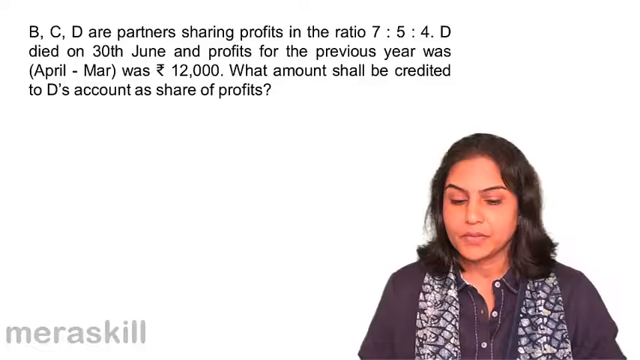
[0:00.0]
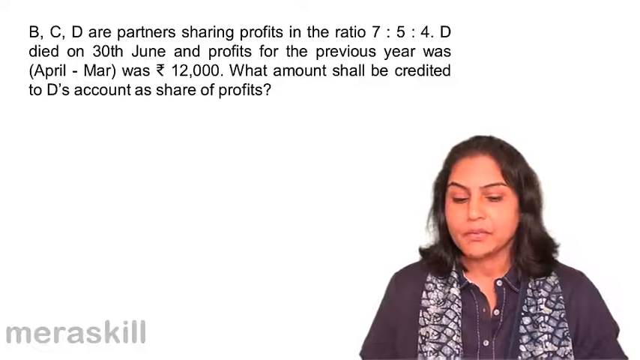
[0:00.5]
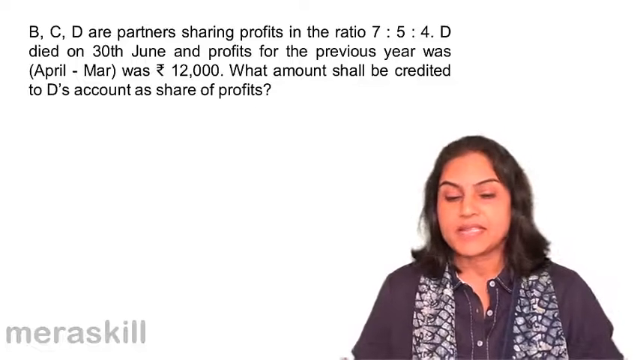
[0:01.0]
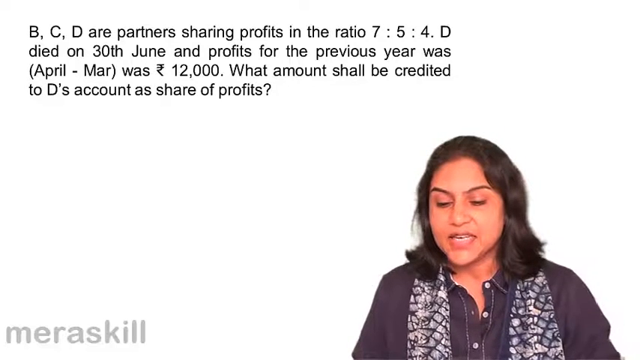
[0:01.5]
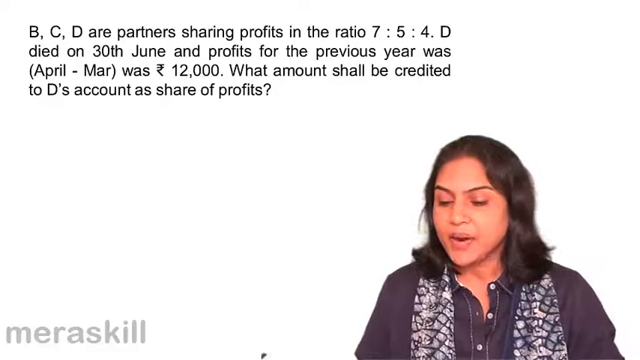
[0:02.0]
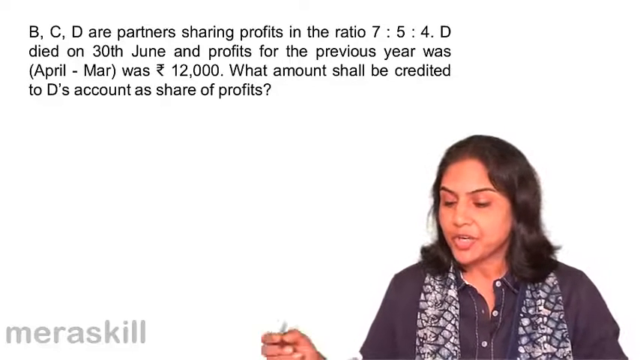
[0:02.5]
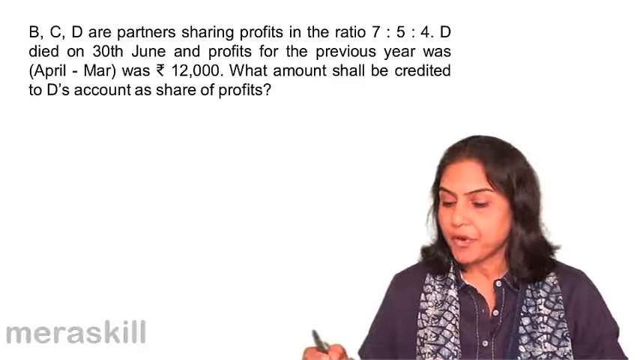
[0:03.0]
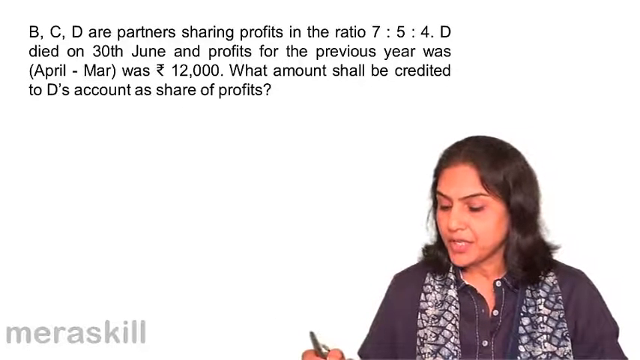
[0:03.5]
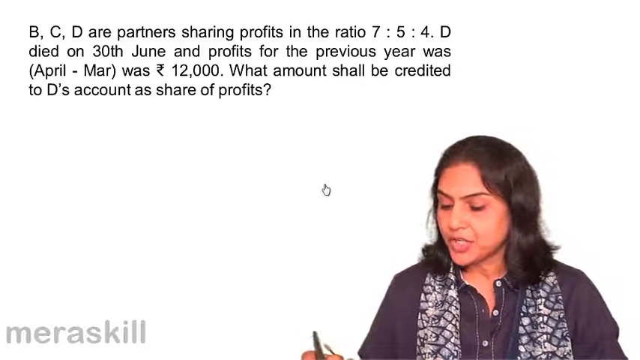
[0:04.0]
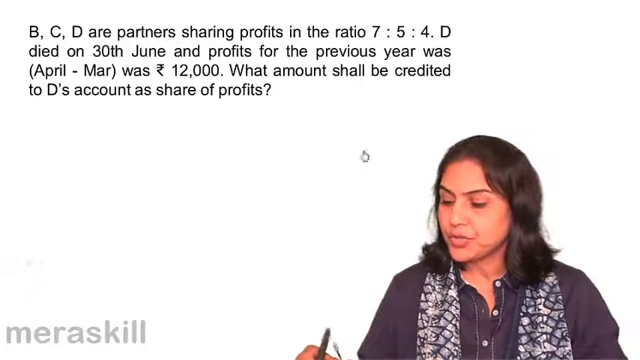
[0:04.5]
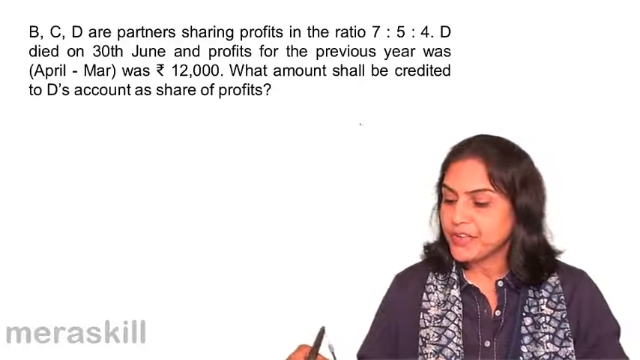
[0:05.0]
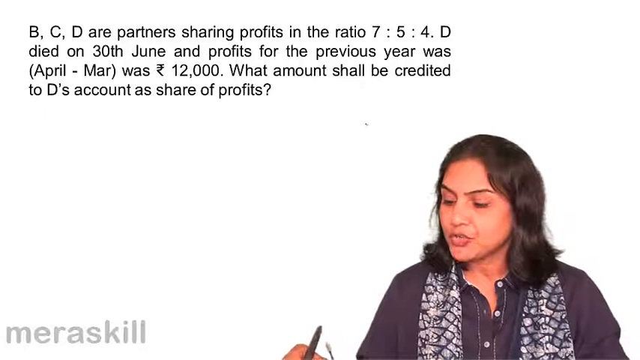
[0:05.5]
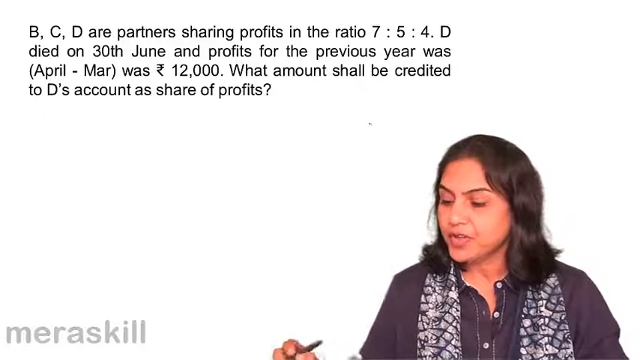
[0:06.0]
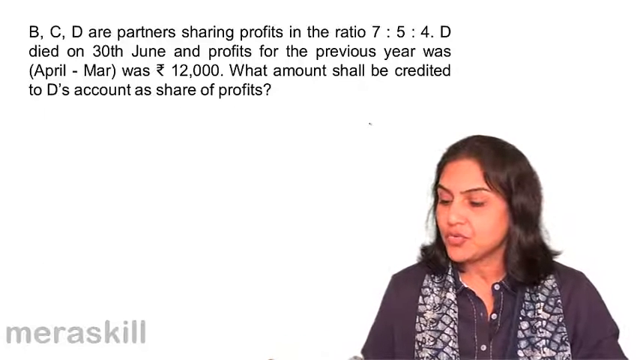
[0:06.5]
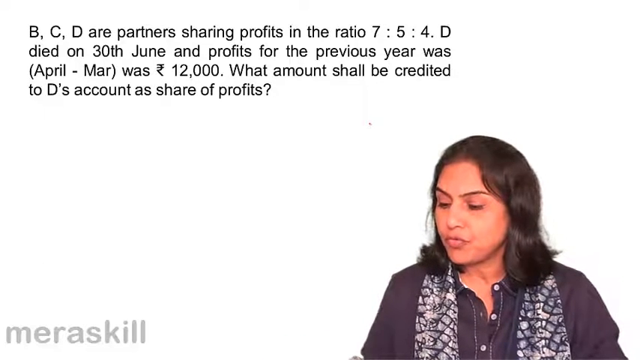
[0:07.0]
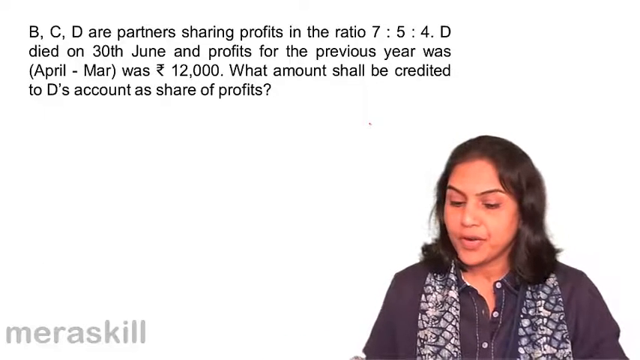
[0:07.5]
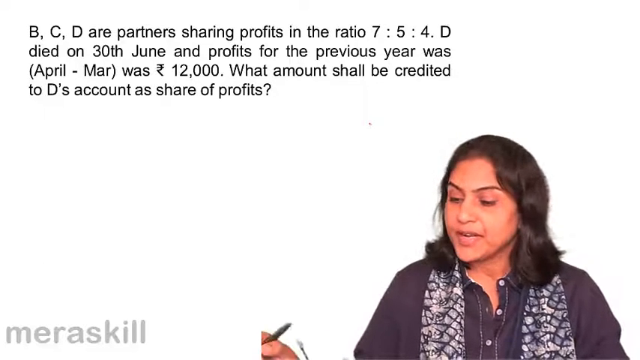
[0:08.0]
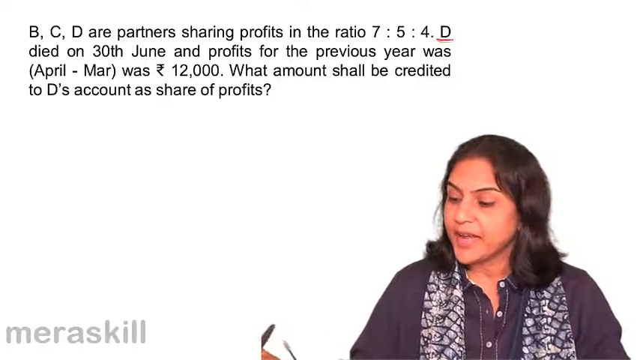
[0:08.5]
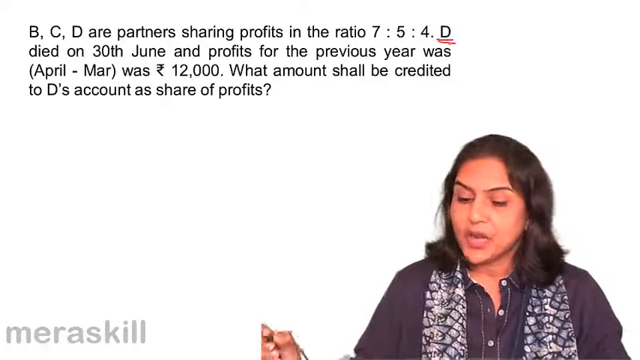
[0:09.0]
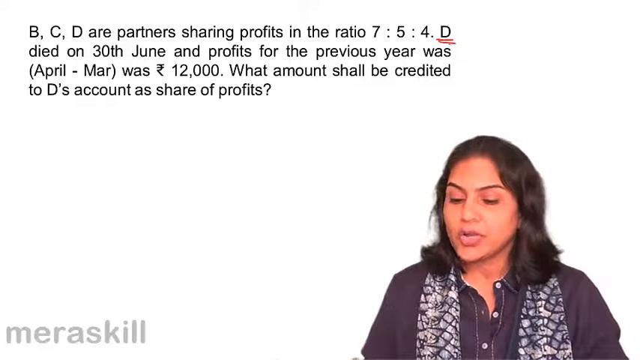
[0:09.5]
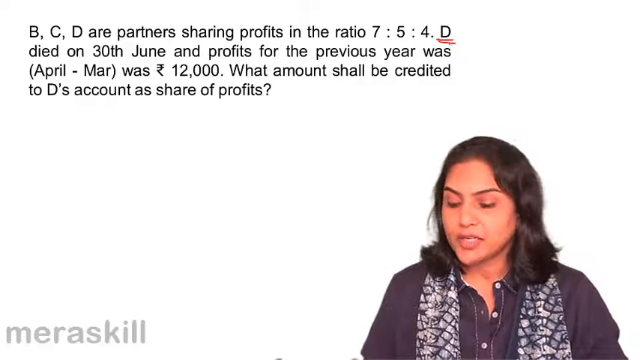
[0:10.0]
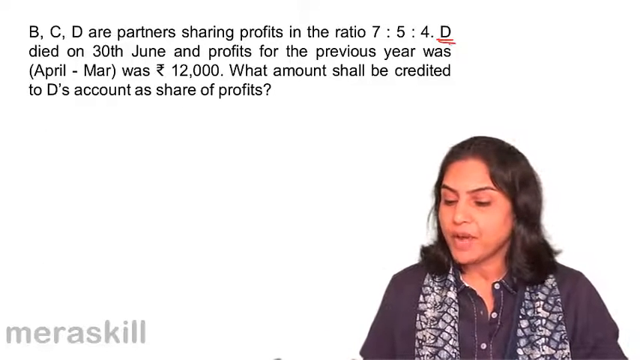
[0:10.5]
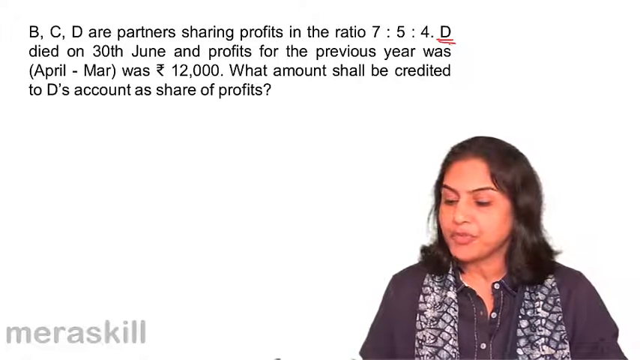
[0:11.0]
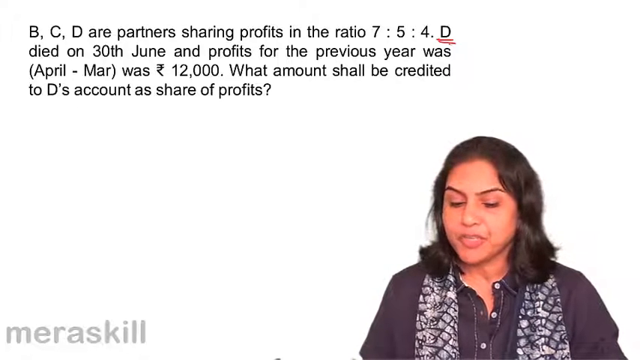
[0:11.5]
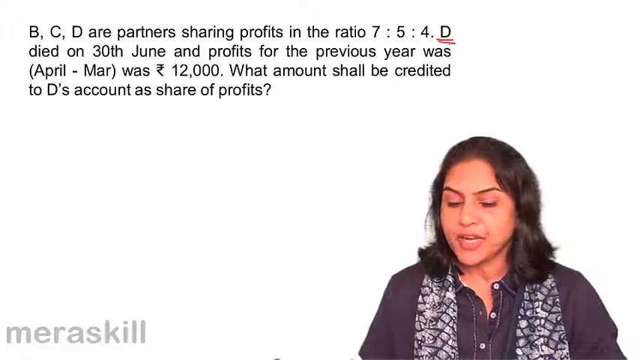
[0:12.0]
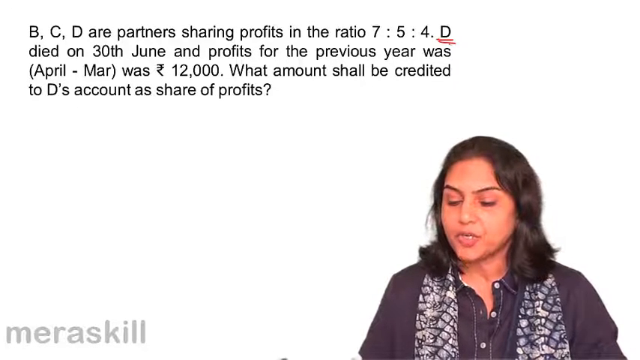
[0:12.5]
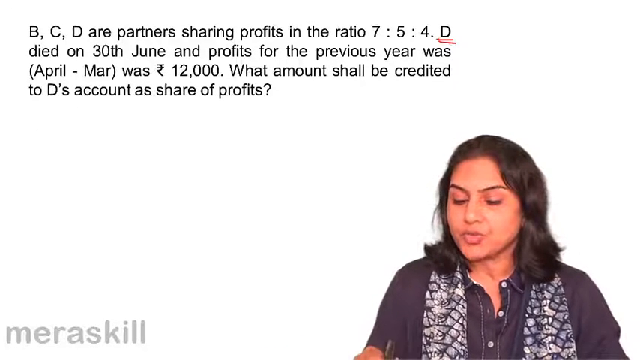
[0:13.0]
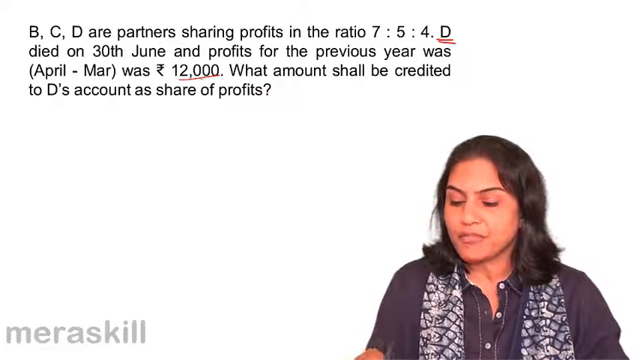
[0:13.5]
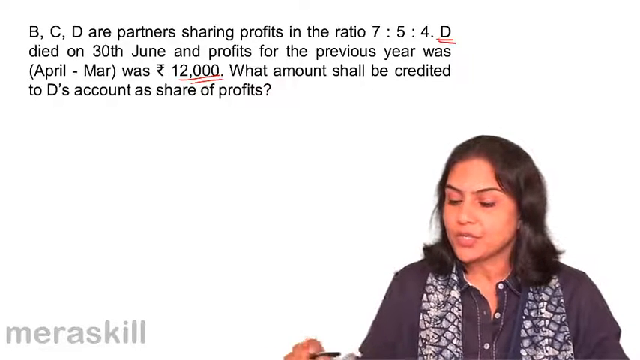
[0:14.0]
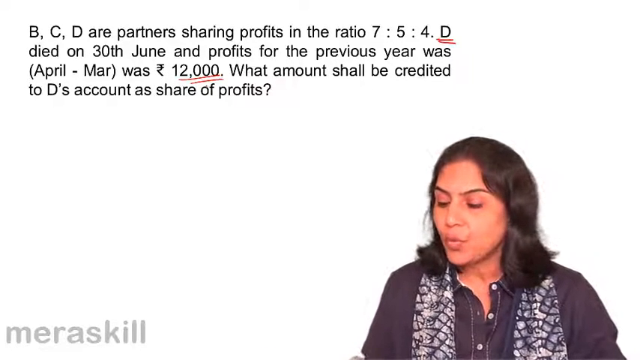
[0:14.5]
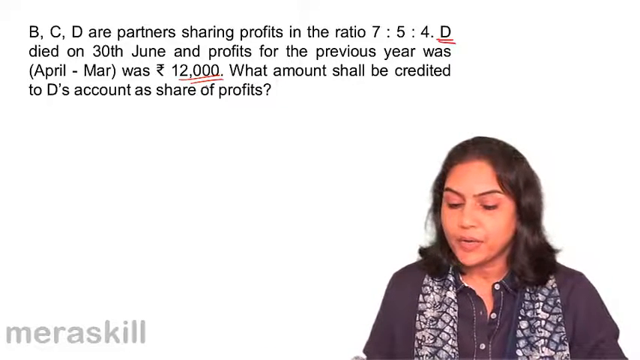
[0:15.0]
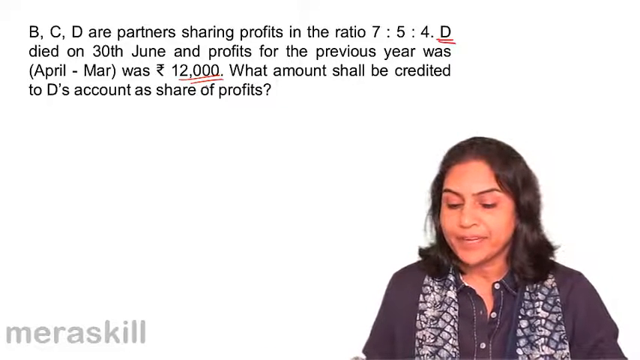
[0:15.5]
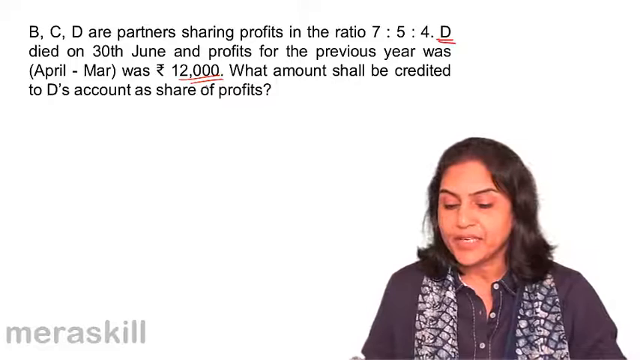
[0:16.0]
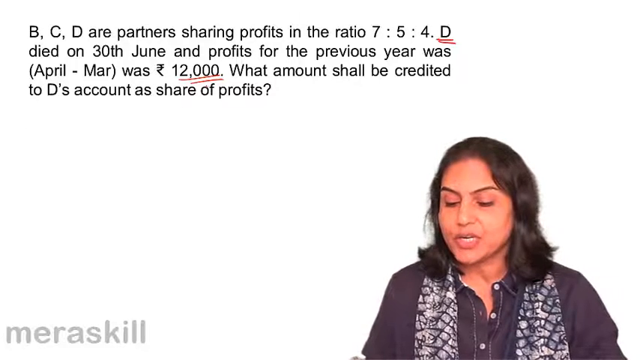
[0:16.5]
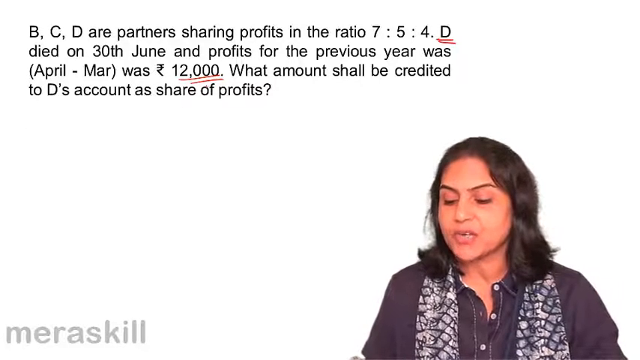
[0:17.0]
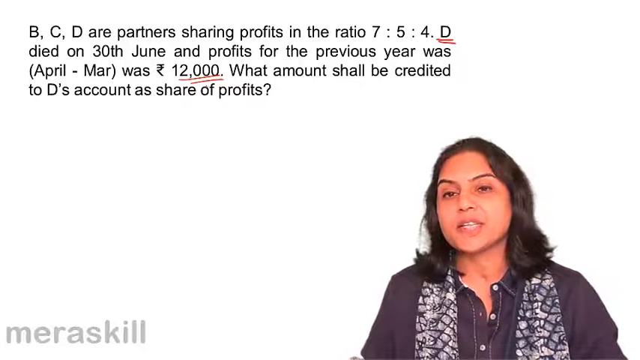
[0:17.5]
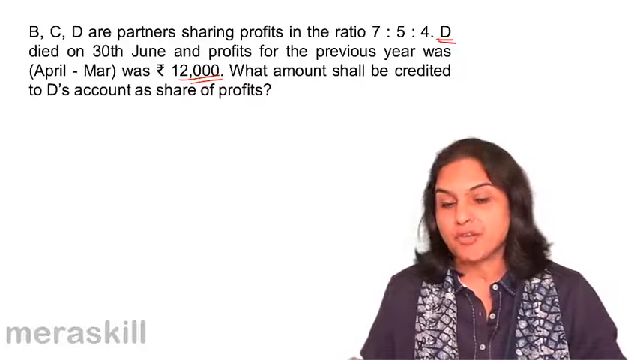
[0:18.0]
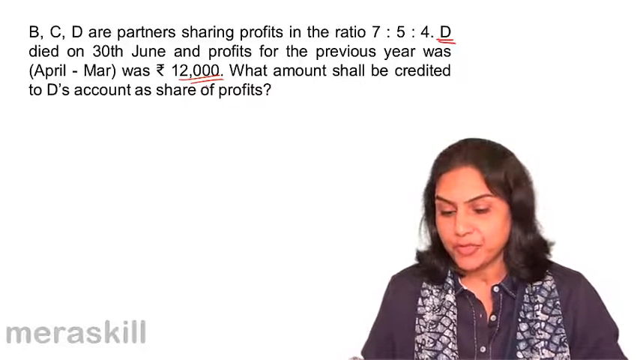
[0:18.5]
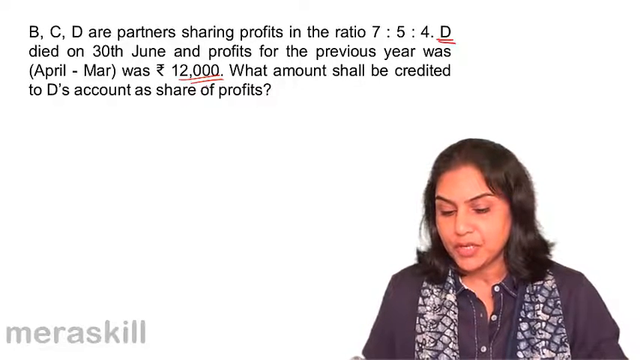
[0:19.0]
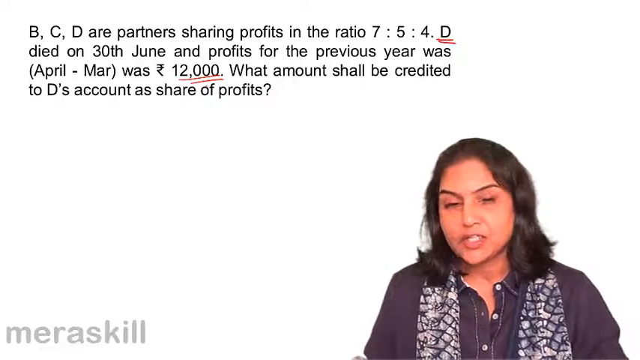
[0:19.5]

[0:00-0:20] The screen shows the text "B, C, D are partners sharing profits in the ratio 7, 5, 4. D died on 30th June and profits for the previous year was April through March was $12,000. What amount shall be credited to D's account as share of profits?" A woman on screen looks downward and speaks. She appears to be writing something and also reading off of something, possibly reading a presentation to people. She wears dark clothing, a dark blouse and a dark gray and black scarf. The word "Miraskill" appears on screen, possibly a business name or her name. It looks like she writes on something as she reads and presents the information.